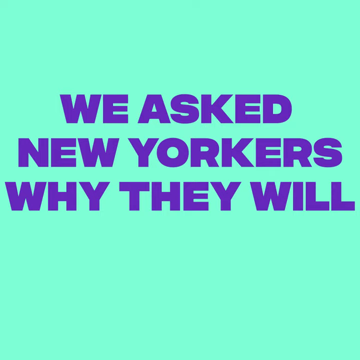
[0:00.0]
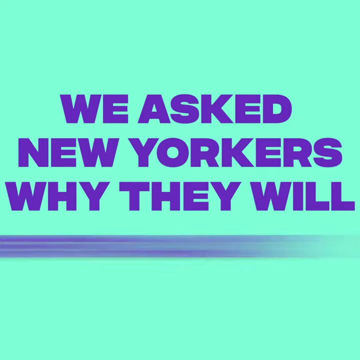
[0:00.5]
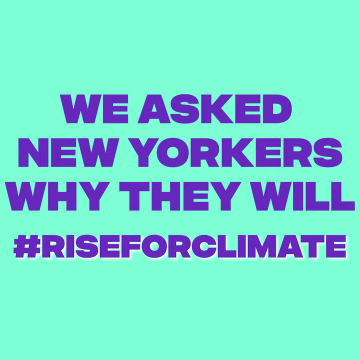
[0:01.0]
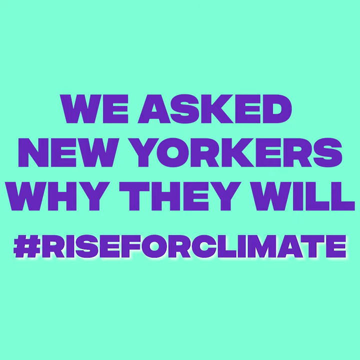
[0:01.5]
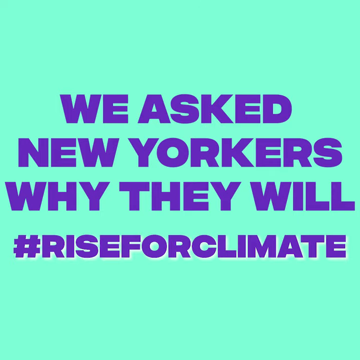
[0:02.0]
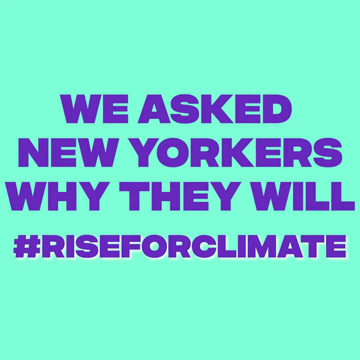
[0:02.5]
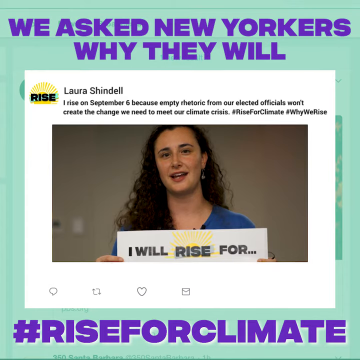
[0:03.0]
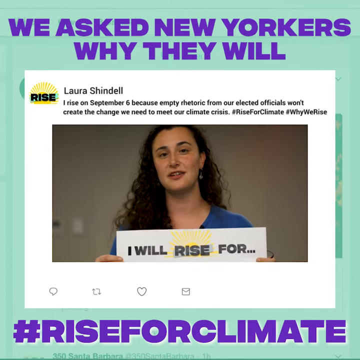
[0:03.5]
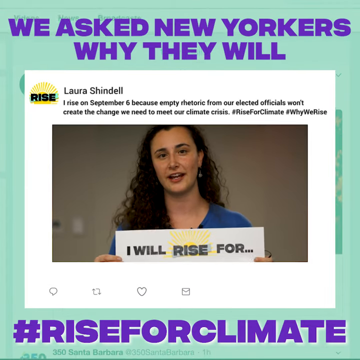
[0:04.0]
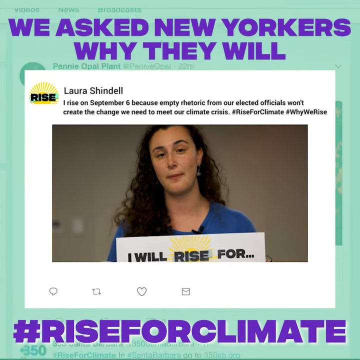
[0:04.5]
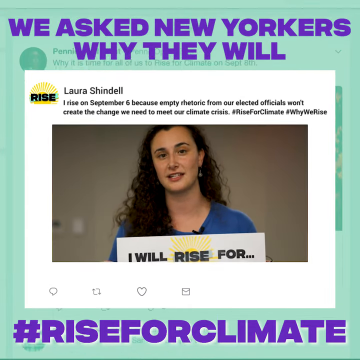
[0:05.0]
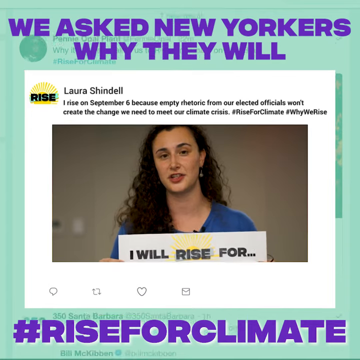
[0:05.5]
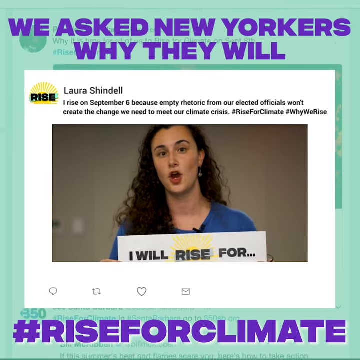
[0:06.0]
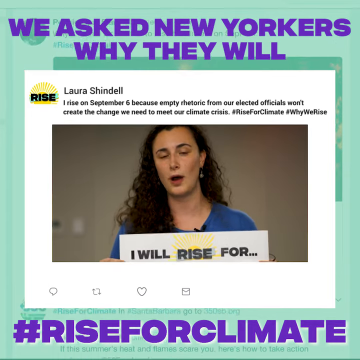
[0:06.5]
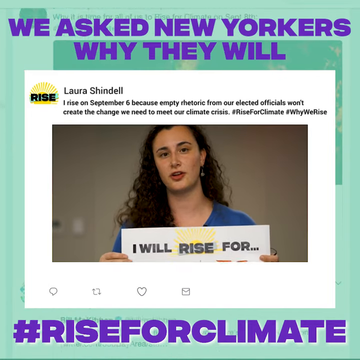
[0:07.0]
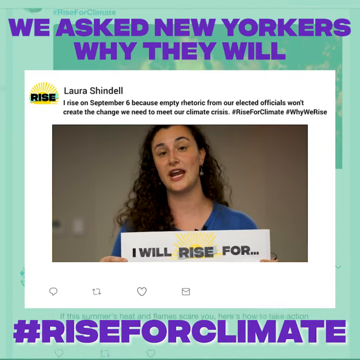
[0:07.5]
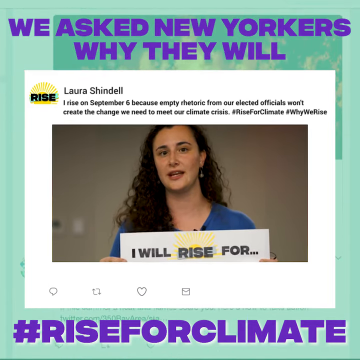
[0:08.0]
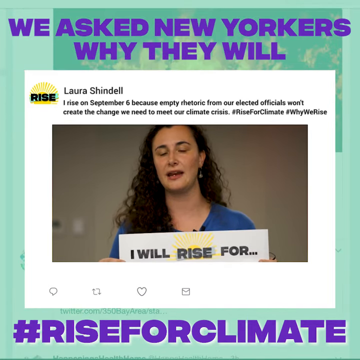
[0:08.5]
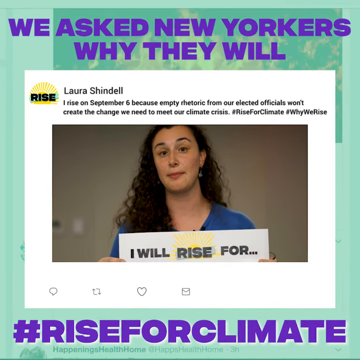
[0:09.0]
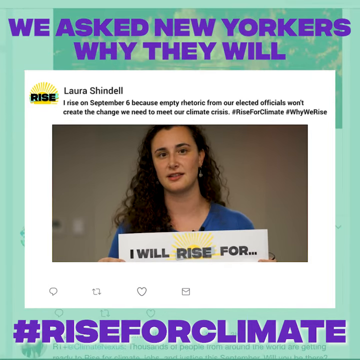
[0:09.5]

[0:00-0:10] Tweets about #rise for climate appear on screen. Laura Shindao holds a flyer that reads "I rise on September 6th because empty rhetoric from our elected officials won't create the change we need to meet our climate crisis. #rise for climate #why we rise." Laura has curly hair and wears makeup. A guy is also protesting, like Laura. The posts are all about climate, and people seem angry about it. New Yorkers are asked why they will #rise for climate, and people reply with how they feel about climate change.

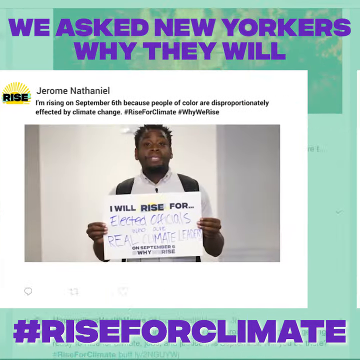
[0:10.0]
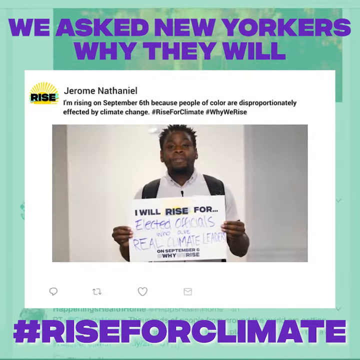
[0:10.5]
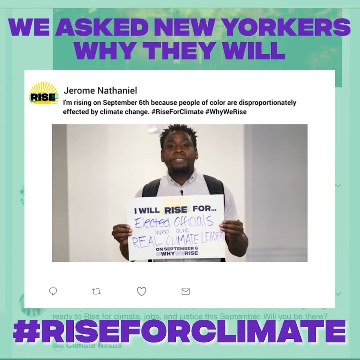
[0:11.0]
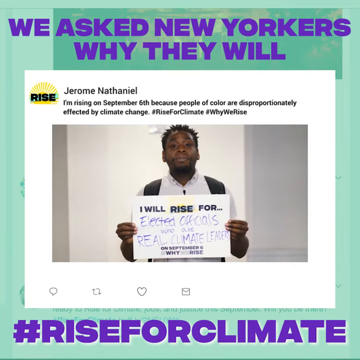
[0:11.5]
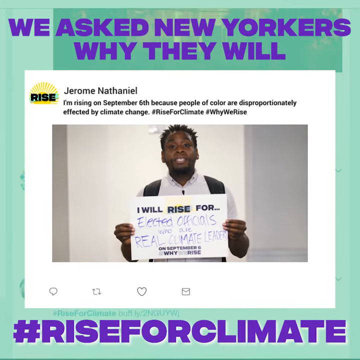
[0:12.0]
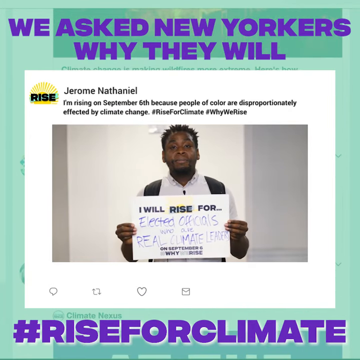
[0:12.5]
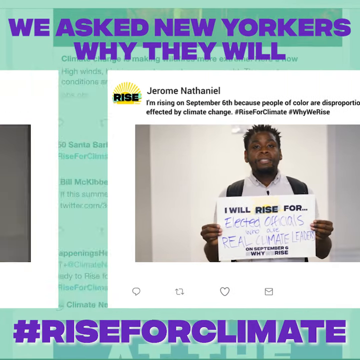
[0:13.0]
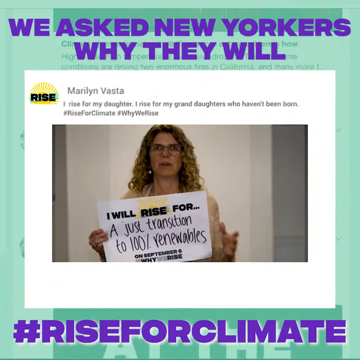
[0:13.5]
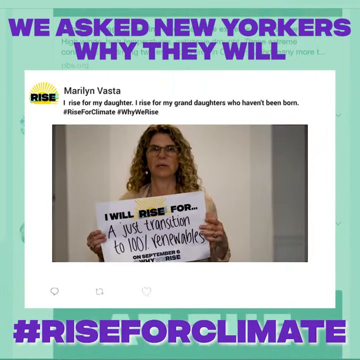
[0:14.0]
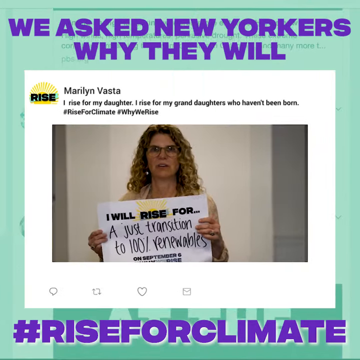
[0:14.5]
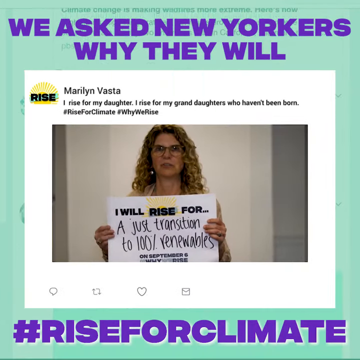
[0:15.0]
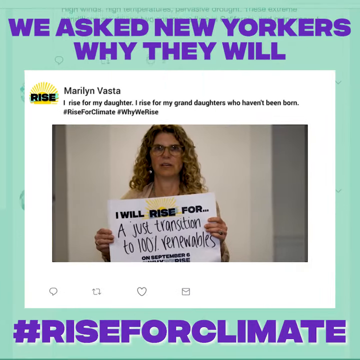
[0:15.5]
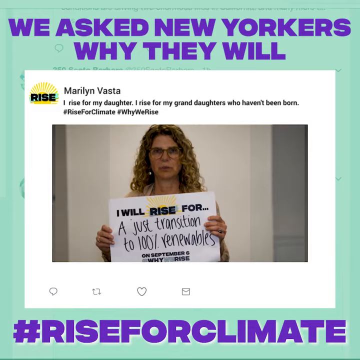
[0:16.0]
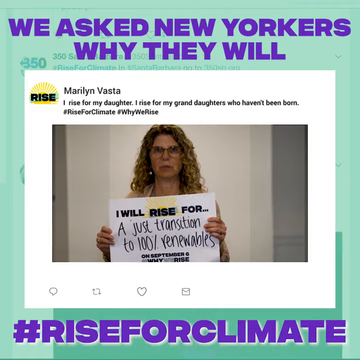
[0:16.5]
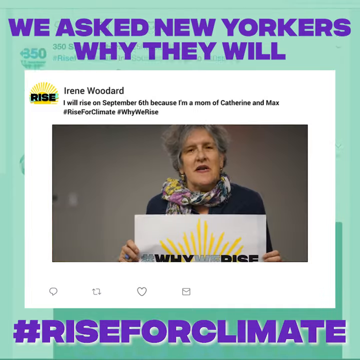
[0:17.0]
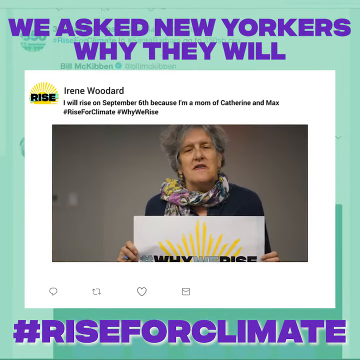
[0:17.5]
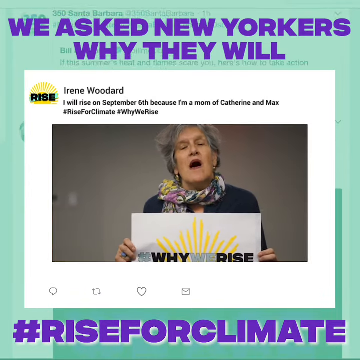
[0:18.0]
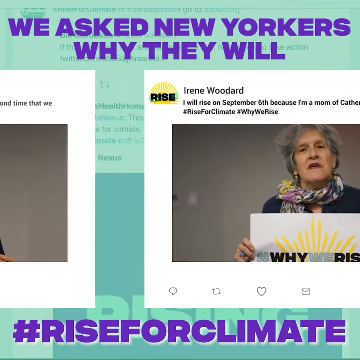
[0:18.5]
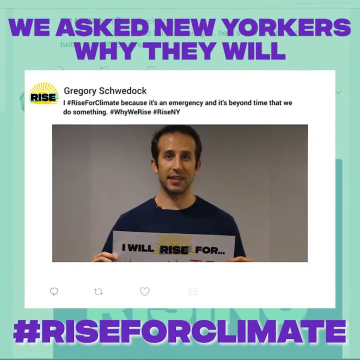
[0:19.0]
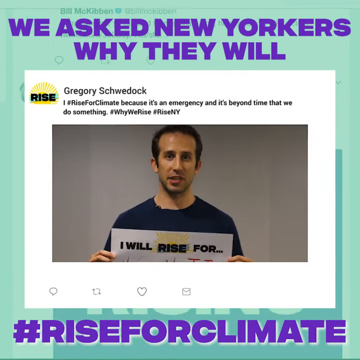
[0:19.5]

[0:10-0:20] A guy holds a flyer. Marilyn Vasta and Greg Sherwood appear, holding flyers. One flyer reads "I'm rising on September 6th because people of color are disproportionately affected by climate change. #rise for climate #we rise." Marilyn Vasta's reads "I will rise for a just transition to 100% renewable." Another message reads "I rise for my daughter. I rise for my granddaughters." followed by "#rise for climate" and "#we rise". Irene Hoodwatch's message reads "I will rise on September 6th because I'm a mom" and ends with "#rise for climate #why we rise."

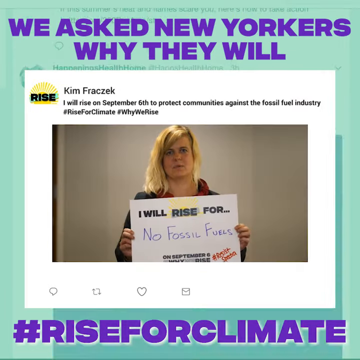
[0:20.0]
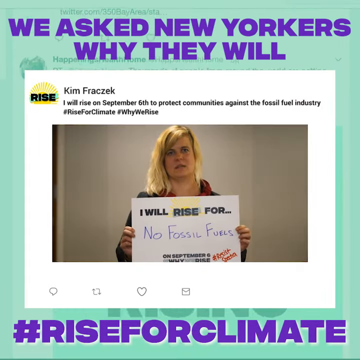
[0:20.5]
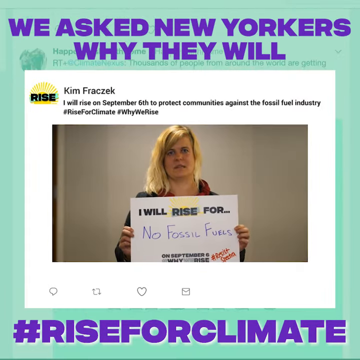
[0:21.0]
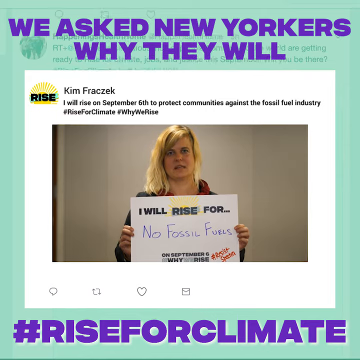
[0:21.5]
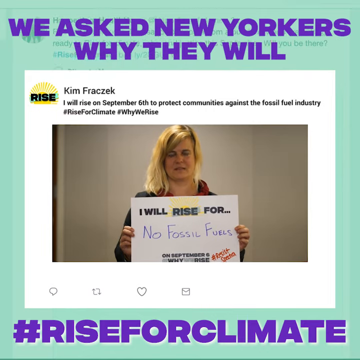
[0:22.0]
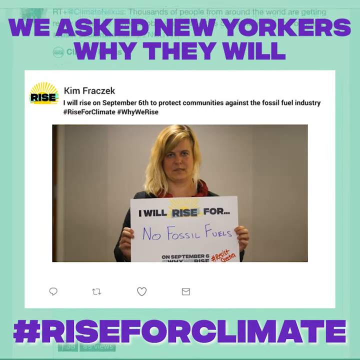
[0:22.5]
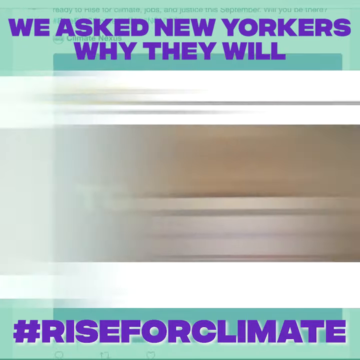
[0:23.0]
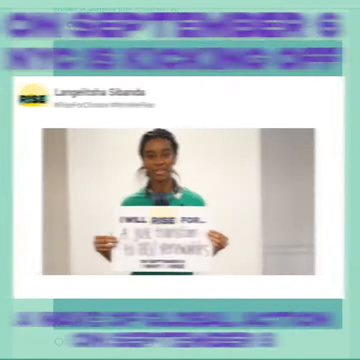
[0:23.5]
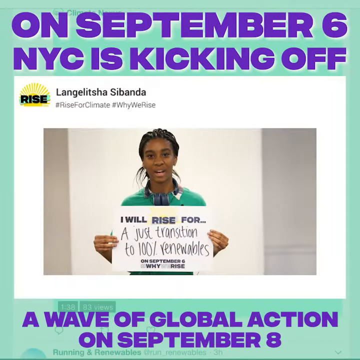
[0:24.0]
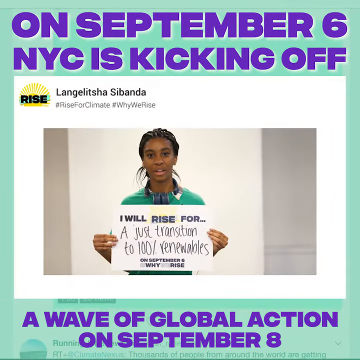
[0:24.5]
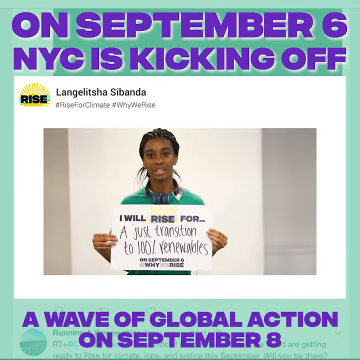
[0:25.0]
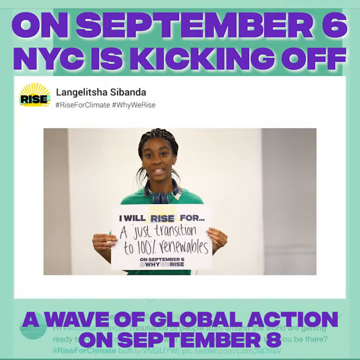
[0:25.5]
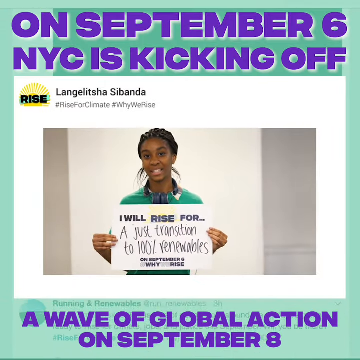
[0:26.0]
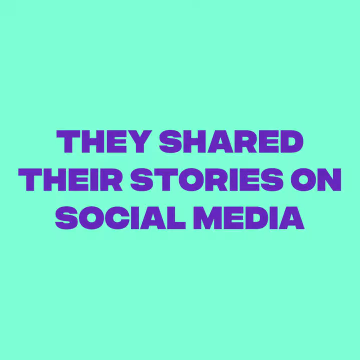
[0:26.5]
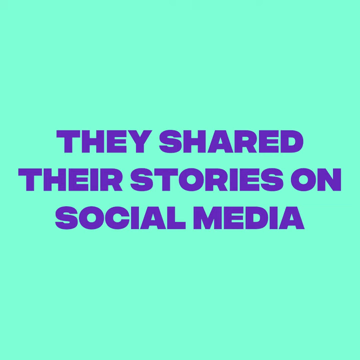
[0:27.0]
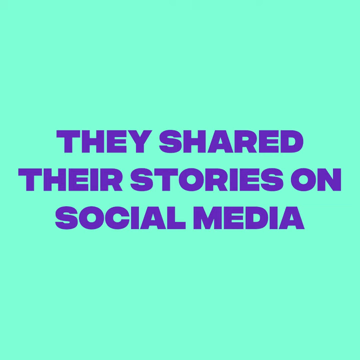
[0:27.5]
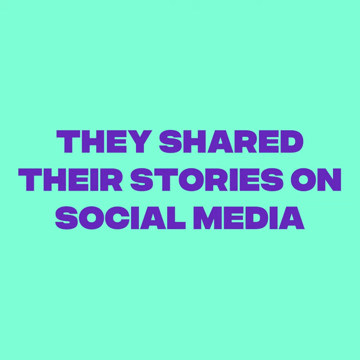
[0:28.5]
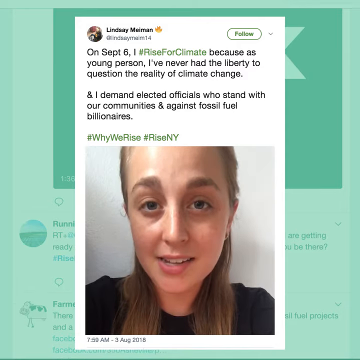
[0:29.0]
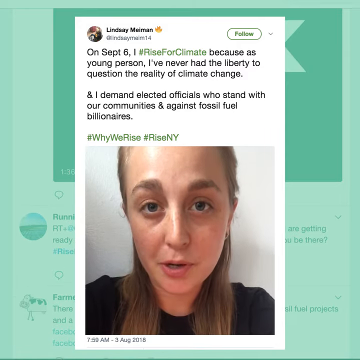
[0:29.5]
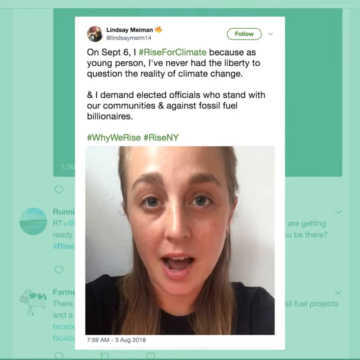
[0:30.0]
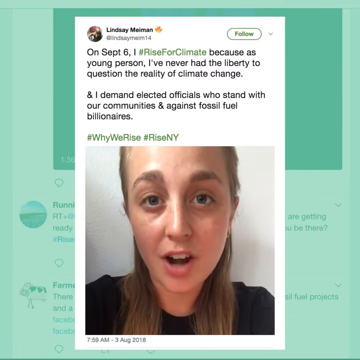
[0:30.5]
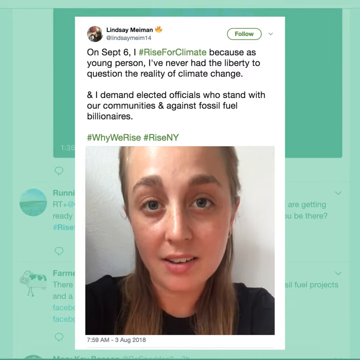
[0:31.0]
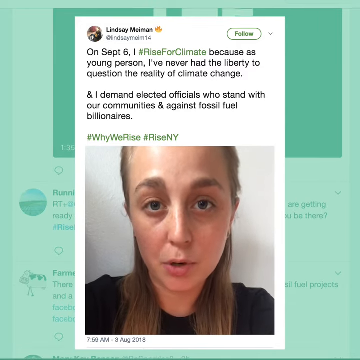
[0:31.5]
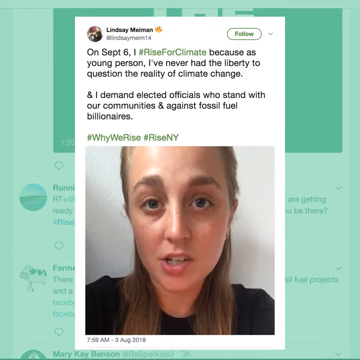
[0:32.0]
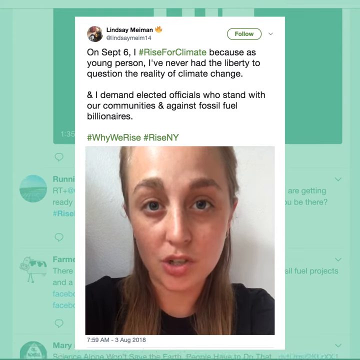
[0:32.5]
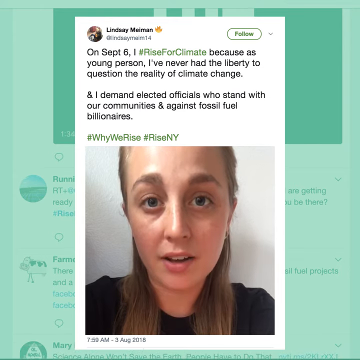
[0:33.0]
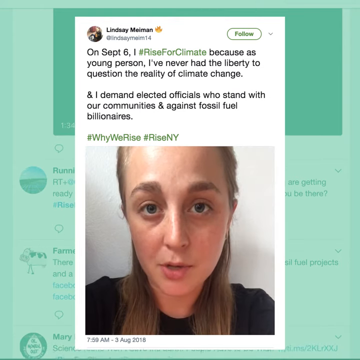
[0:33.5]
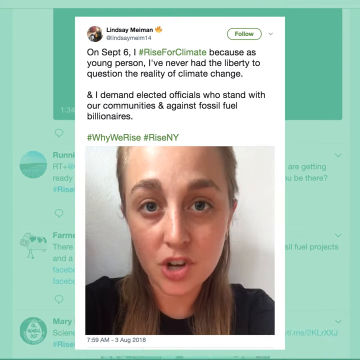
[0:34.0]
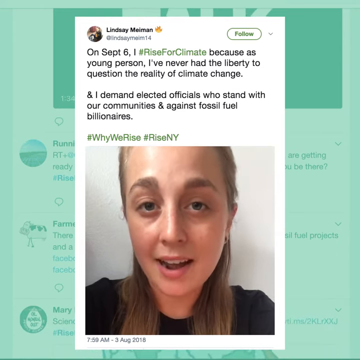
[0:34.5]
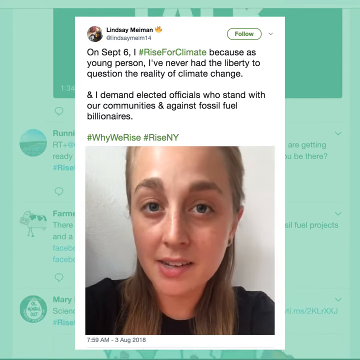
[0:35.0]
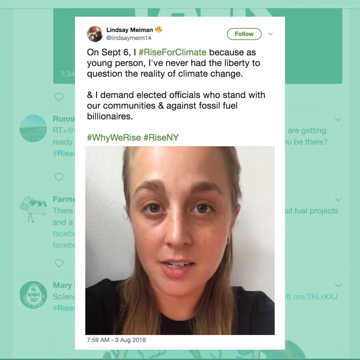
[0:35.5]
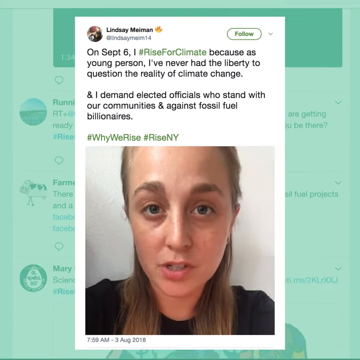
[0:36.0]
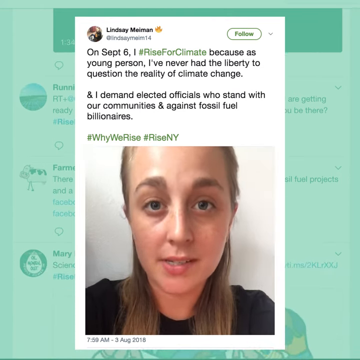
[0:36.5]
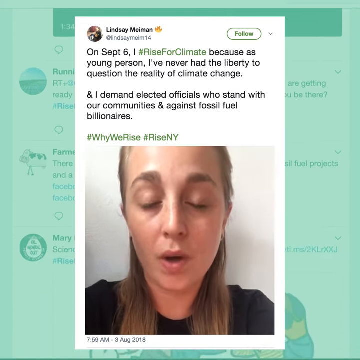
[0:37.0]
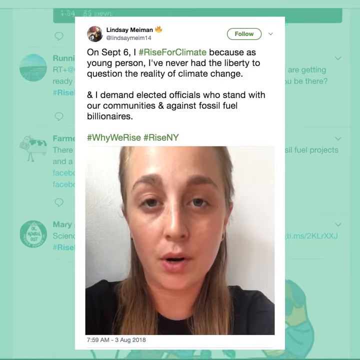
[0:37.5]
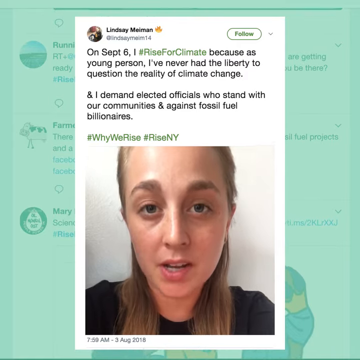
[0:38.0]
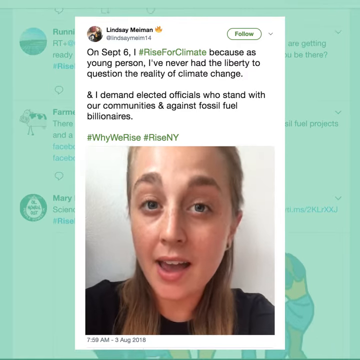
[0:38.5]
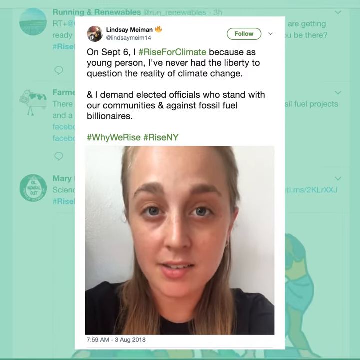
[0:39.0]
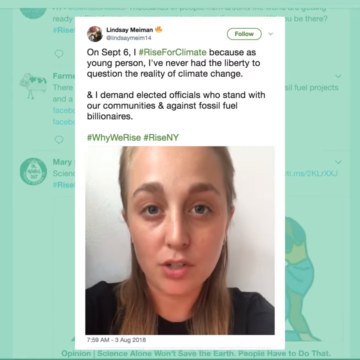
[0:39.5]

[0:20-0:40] A tweet from Langele Chasmanda reads "on 6th September, I rise for climate because as a young person I have never had the liberty to question the reality of climate change and I demand elected officials who stand with our communities and against fossil fuel billionaires, #we rise, #rise New York." Another tweet follows. Kim Freczak's reads "I will rise on September 6th to protect creatures" with "#rise for climate #we rise", and "I rise for no fossil fuels." Next, Langelecha Sivanda's post reads "#rise for climate, #why we rise. I will rise for a just transition to 100 percent renewable on September 6th." Another tweet goes by too fast to read.